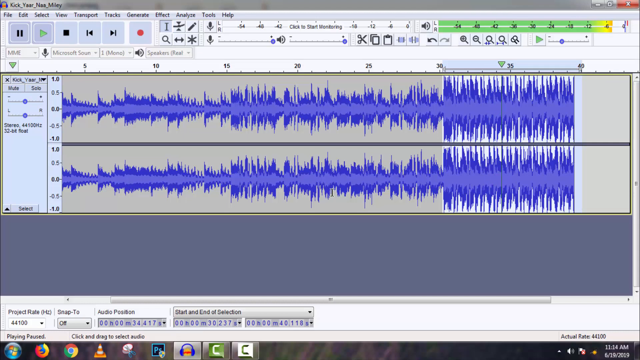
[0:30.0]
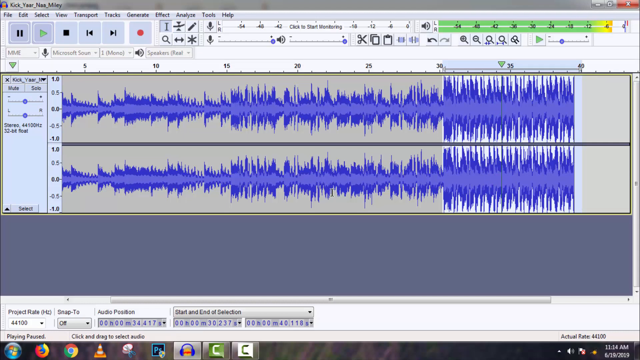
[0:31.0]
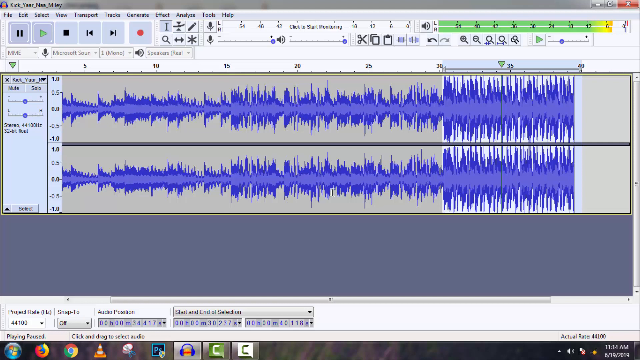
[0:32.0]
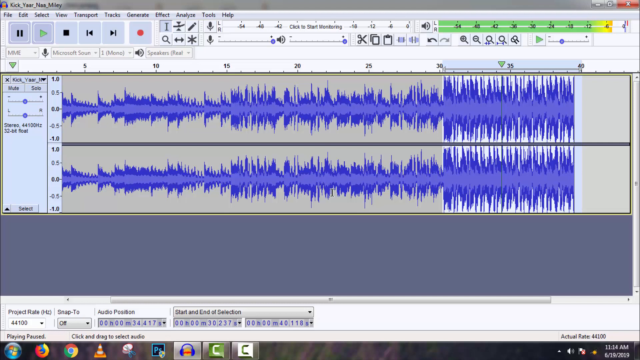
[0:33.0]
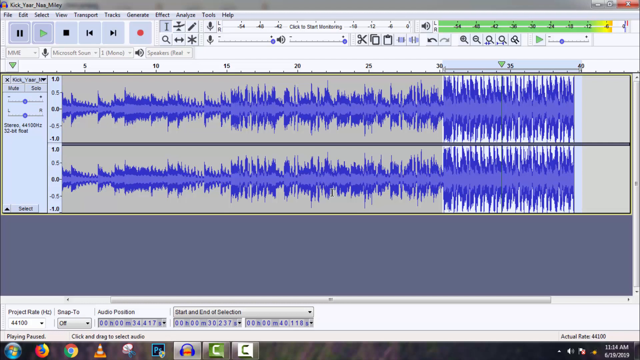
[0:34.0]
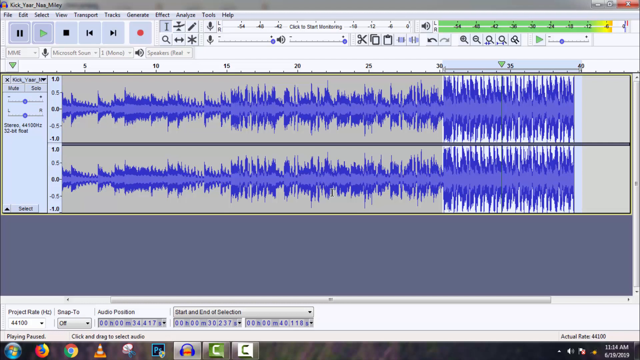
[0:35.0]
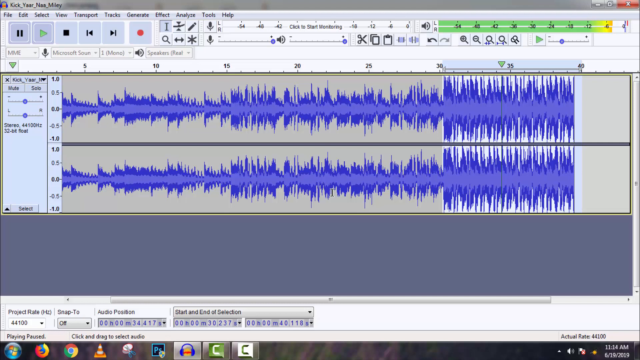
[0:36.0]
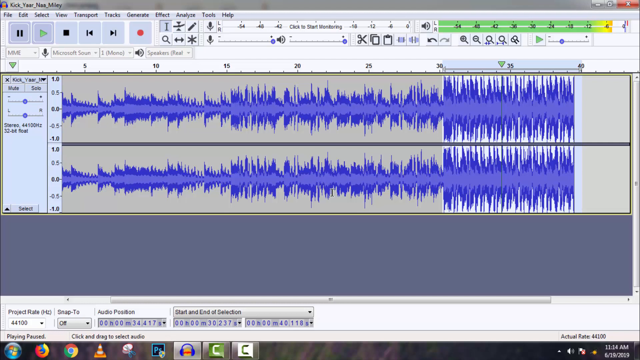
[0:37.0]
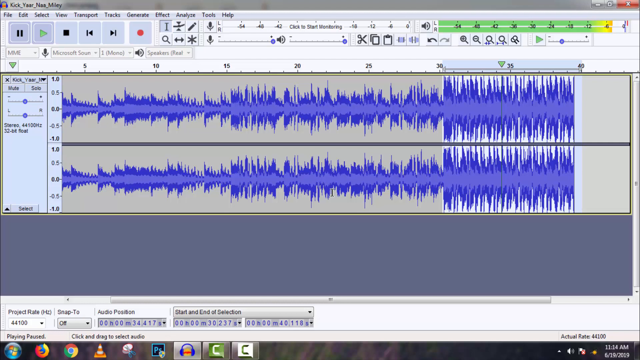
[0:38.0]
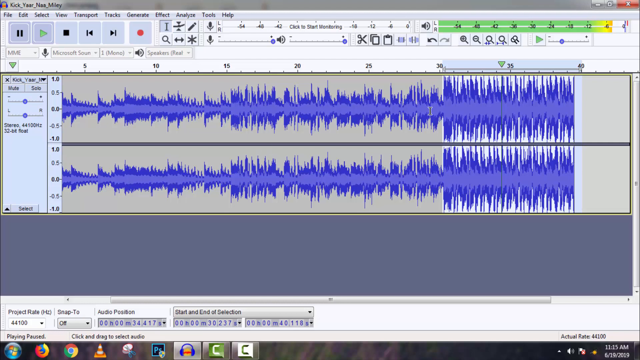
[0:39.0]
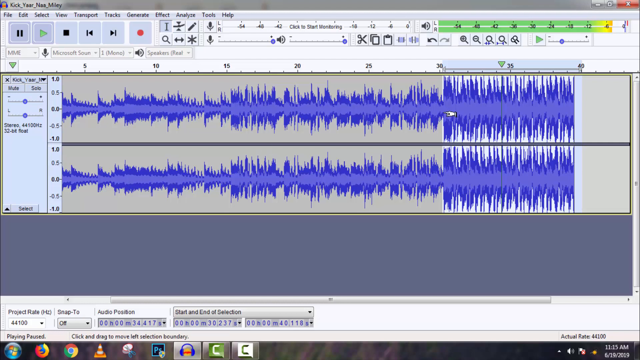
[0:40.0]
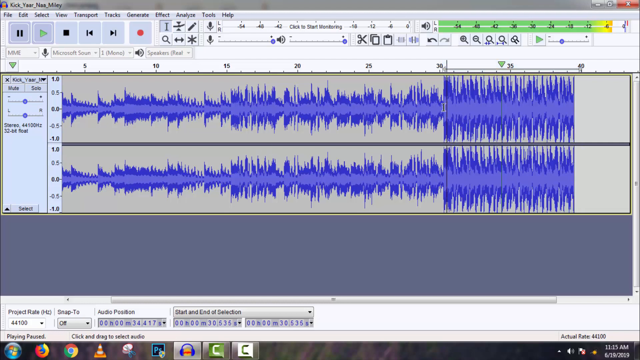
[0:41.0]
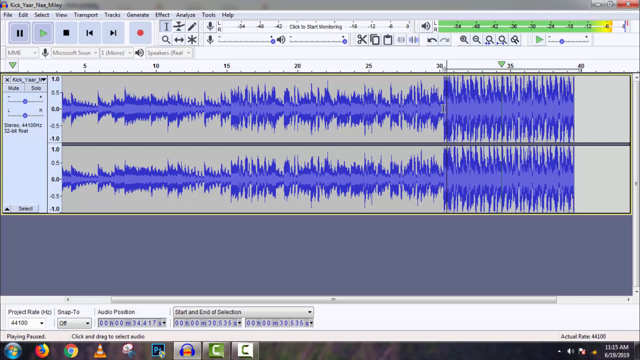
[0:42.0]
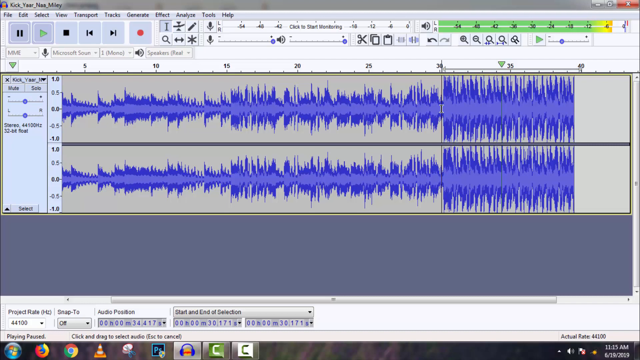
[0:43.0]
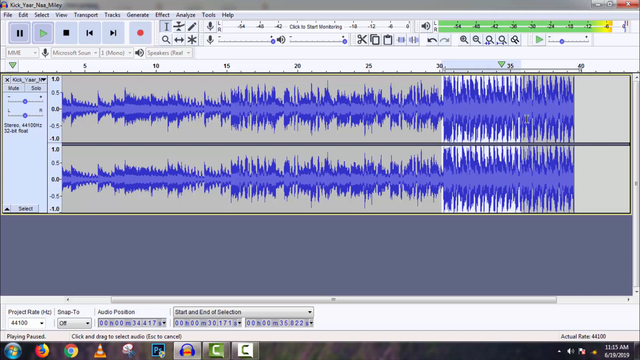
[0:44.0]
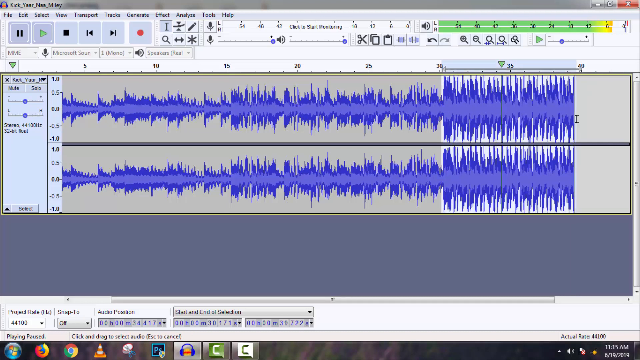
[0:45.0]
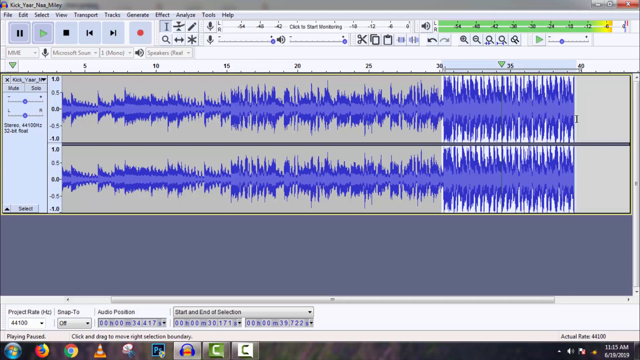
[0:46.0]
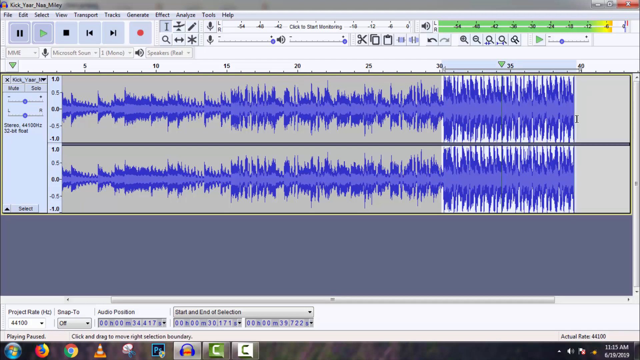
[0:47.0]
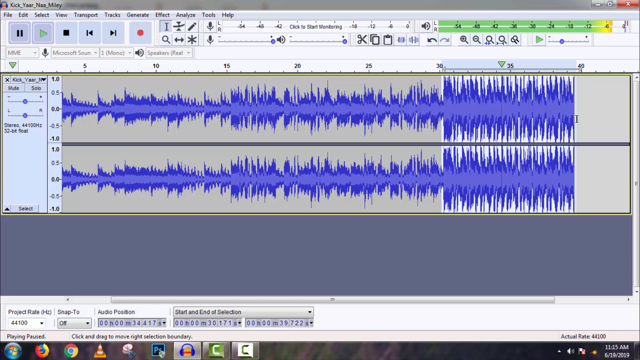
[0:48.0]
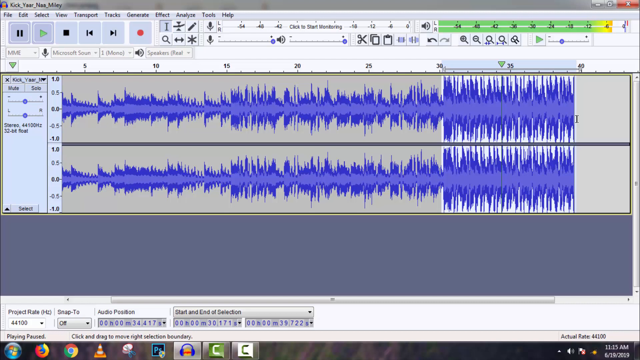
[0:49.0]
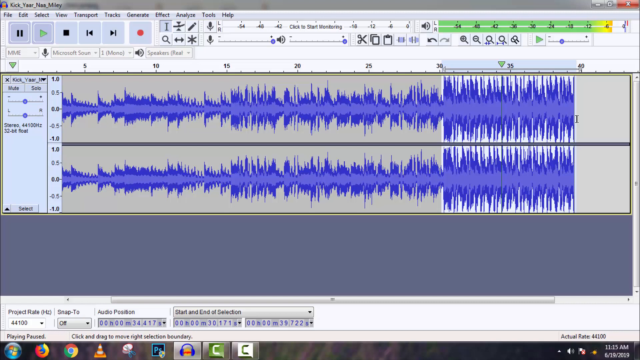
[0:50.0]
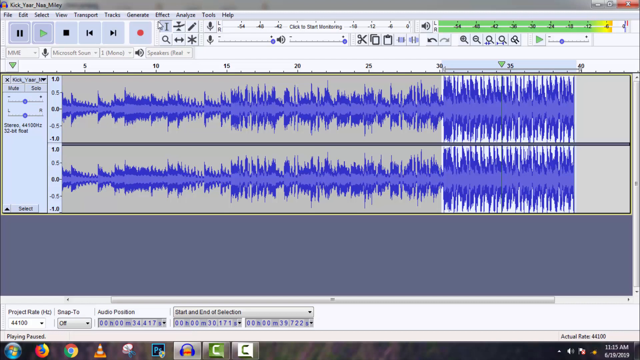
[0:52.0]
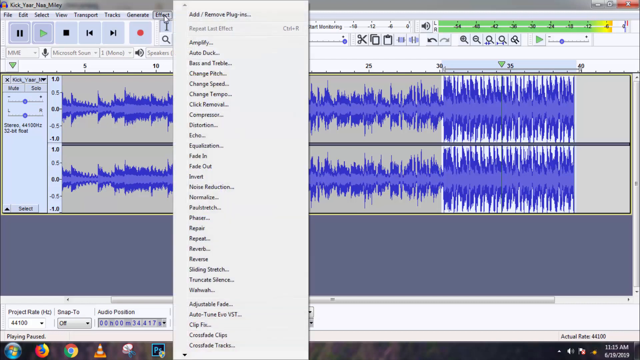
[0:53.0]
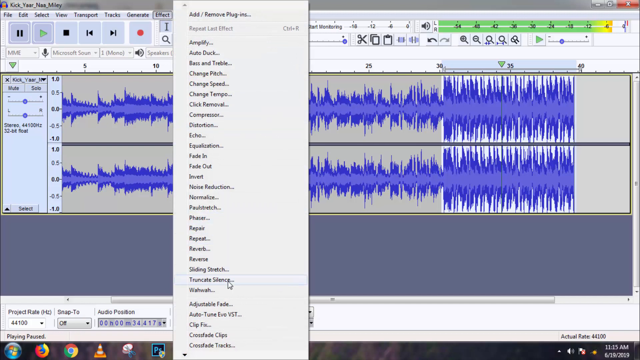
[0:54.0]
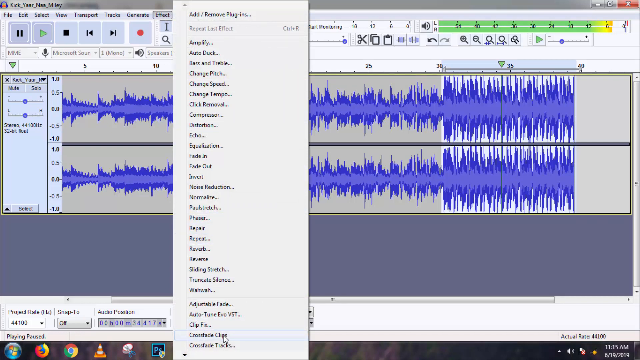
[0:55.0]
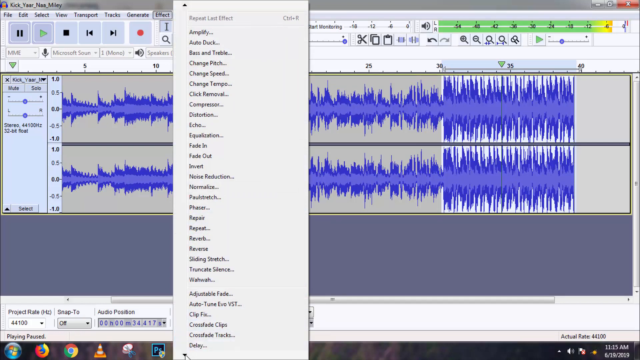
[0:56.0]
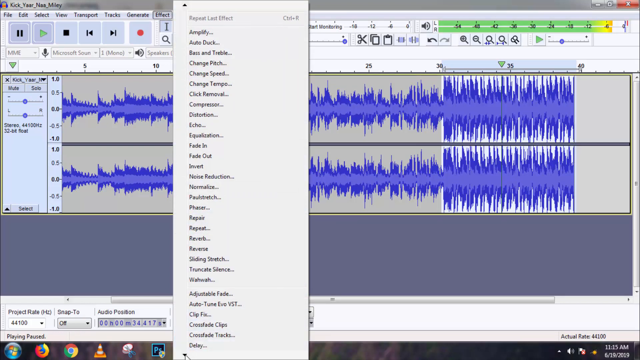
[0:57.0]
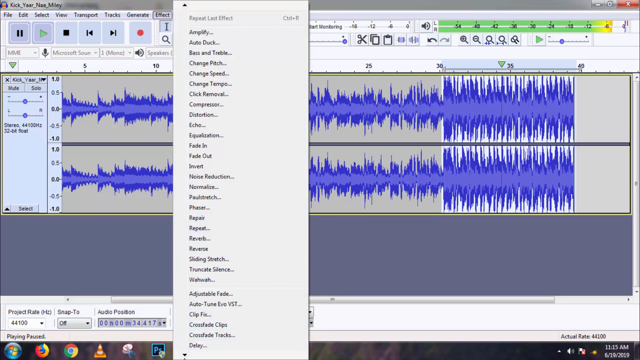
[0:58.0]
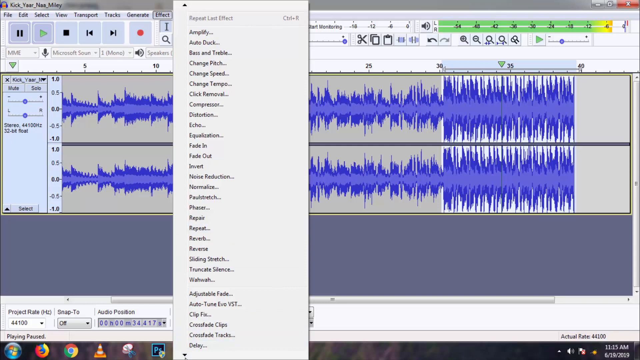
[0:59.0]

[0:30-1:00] The screen still shows what looks like some type of synthesizer or music-making program, with sound waves in dark purple and light purple with a bluish tint. At the top it says "KICK YEAR NOZMALI", and the top bar has the menu options file, edit, select, view, transport, tracks, generate, effect, analyze, tools, and help. The project rate in hertz, the audio position, and the start and end of the selection are displayed as the recording is worked through and adjusted.